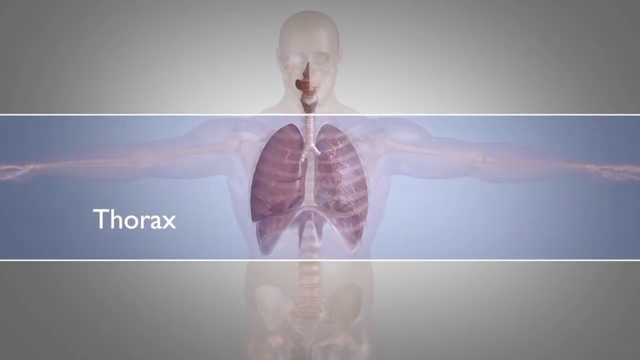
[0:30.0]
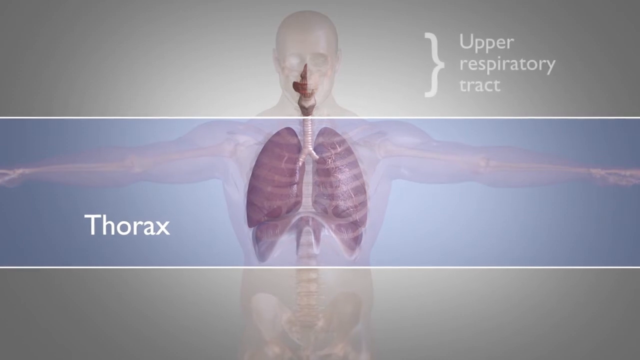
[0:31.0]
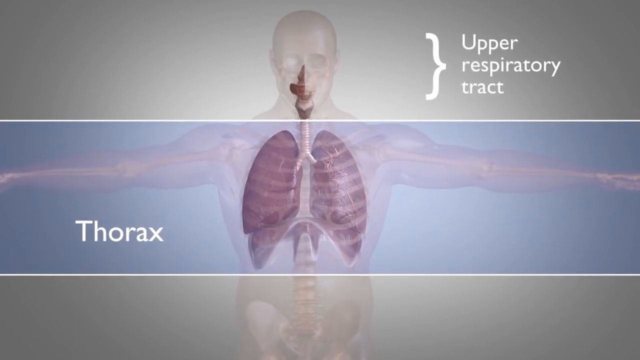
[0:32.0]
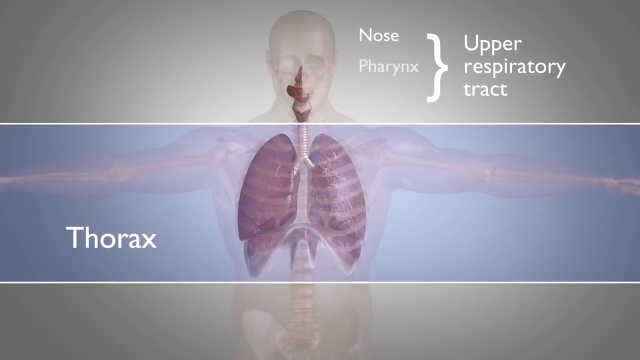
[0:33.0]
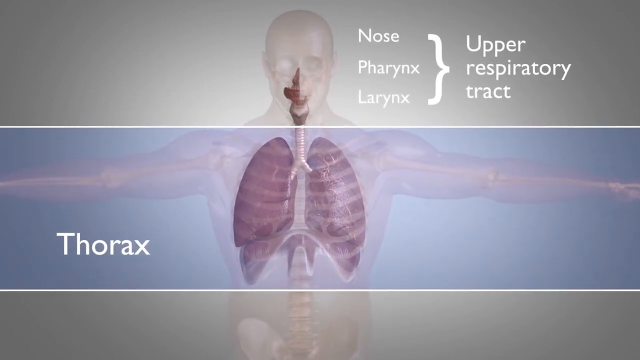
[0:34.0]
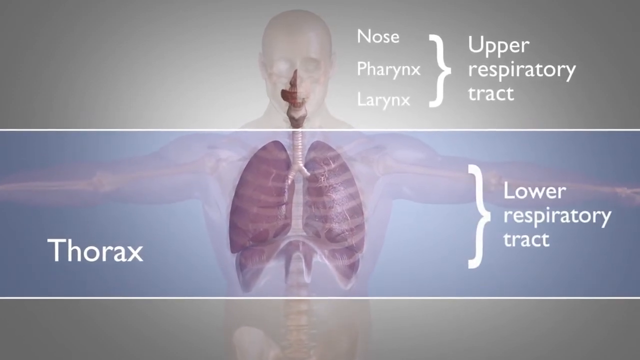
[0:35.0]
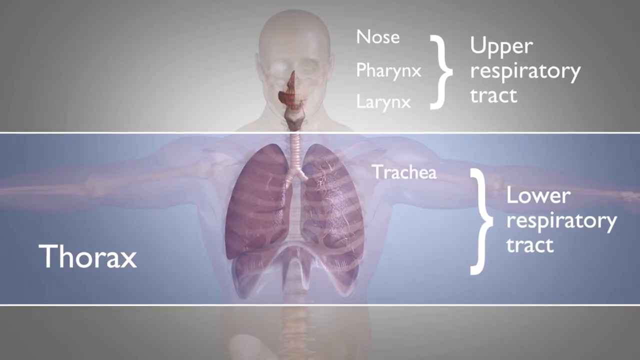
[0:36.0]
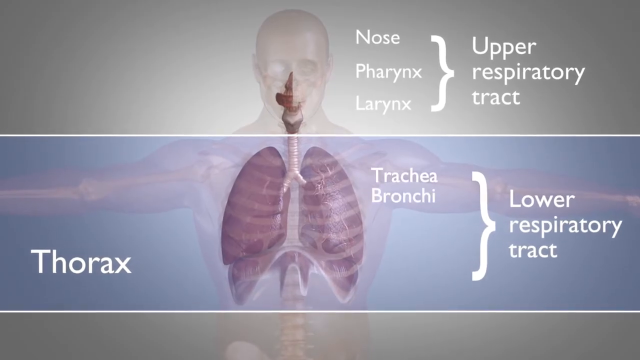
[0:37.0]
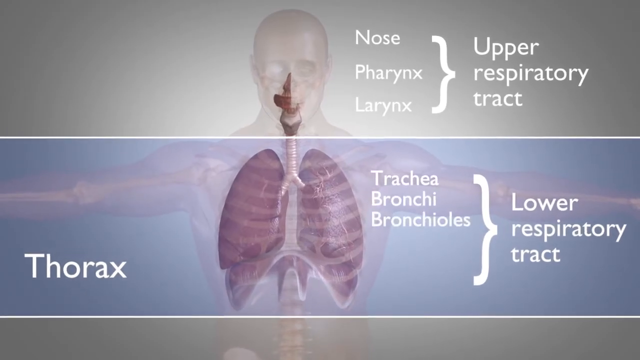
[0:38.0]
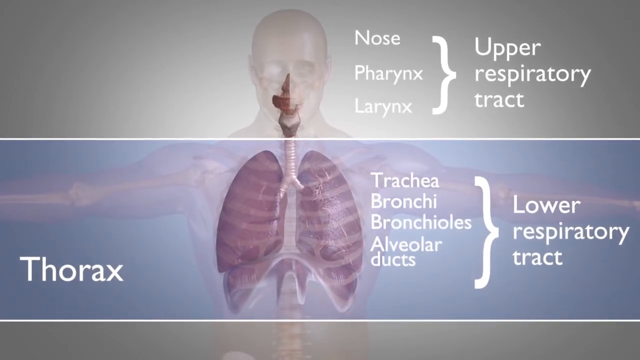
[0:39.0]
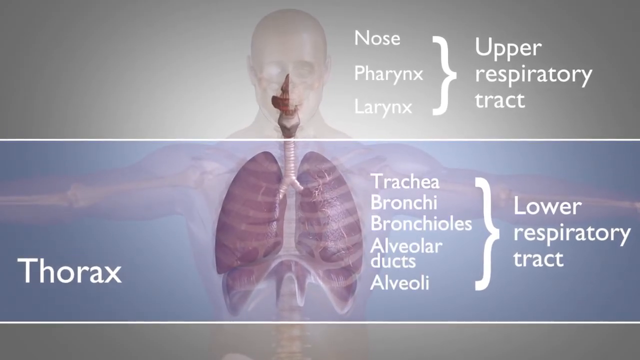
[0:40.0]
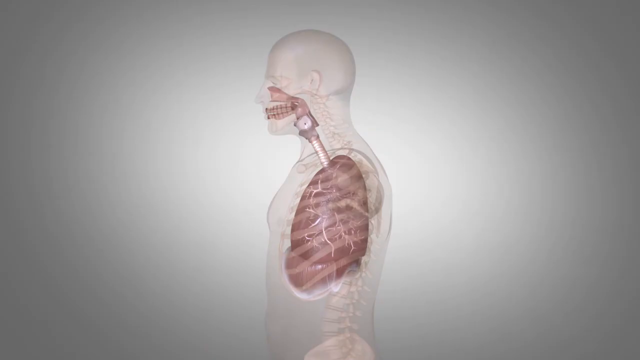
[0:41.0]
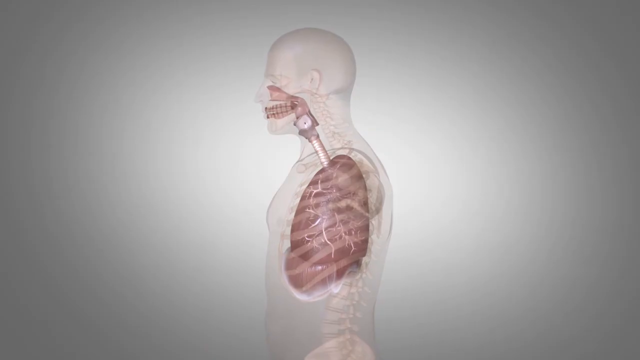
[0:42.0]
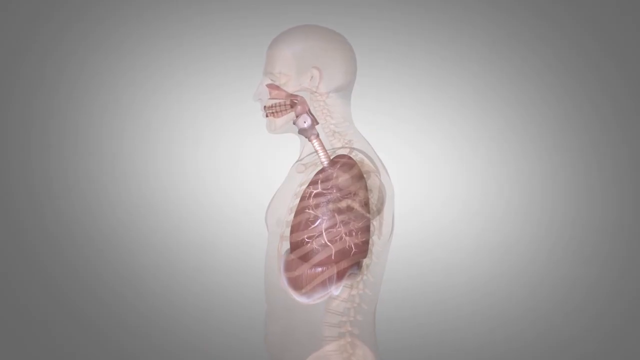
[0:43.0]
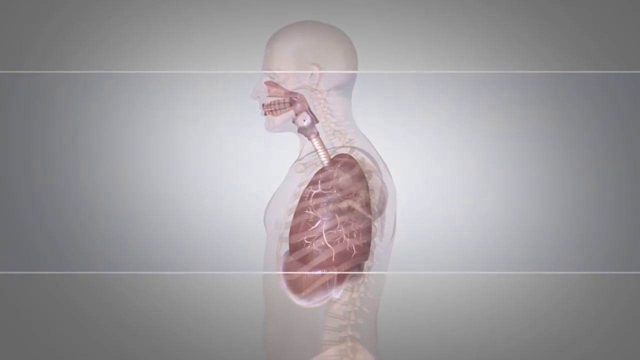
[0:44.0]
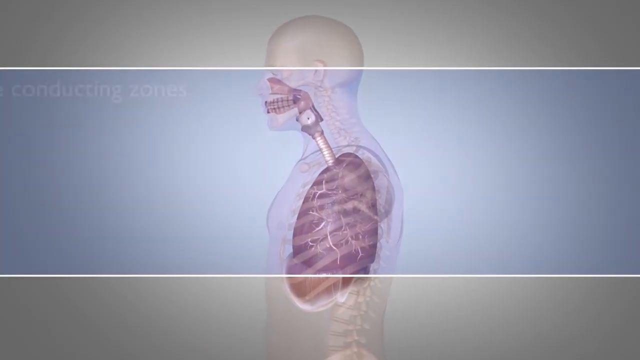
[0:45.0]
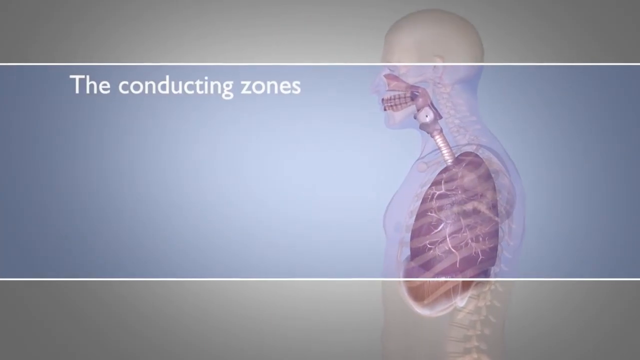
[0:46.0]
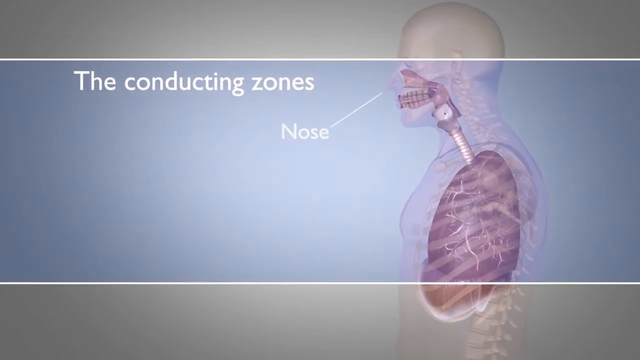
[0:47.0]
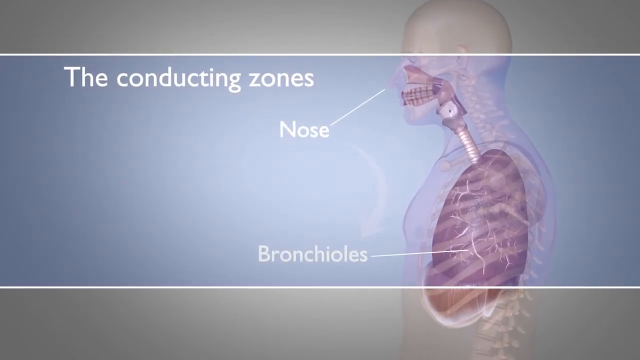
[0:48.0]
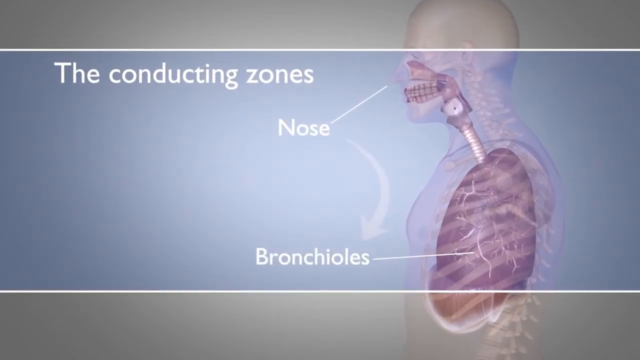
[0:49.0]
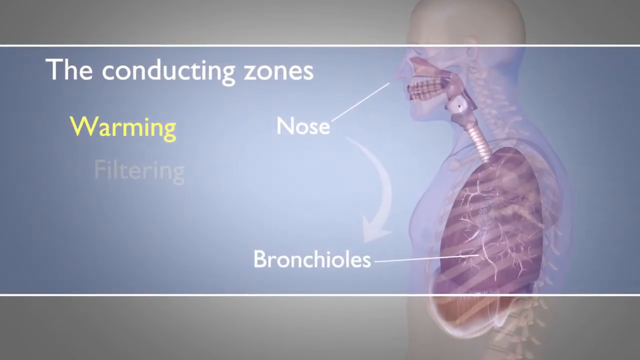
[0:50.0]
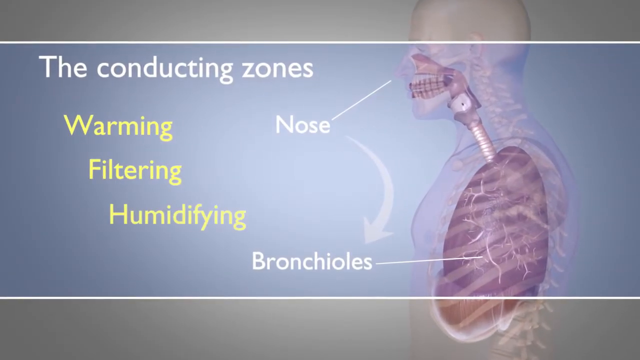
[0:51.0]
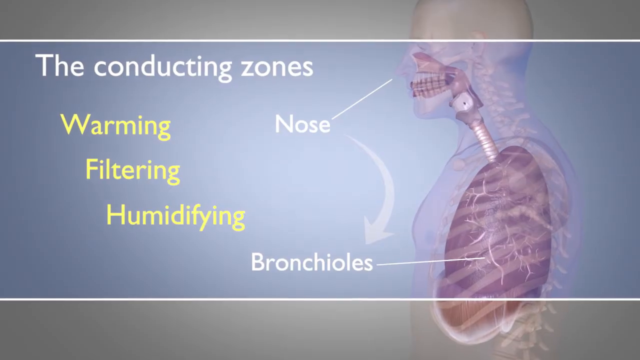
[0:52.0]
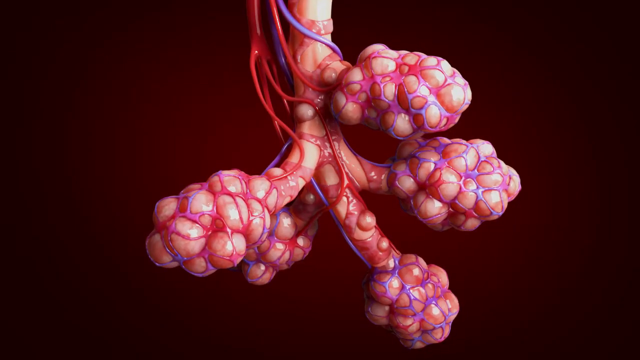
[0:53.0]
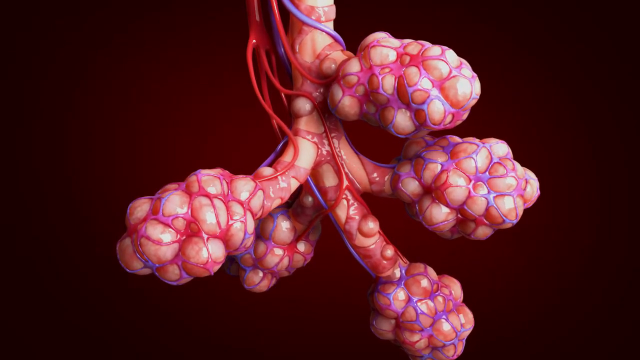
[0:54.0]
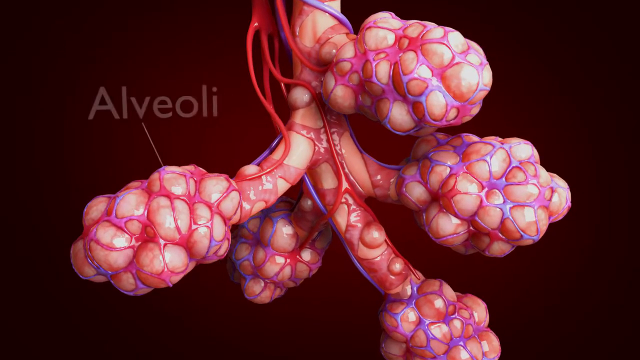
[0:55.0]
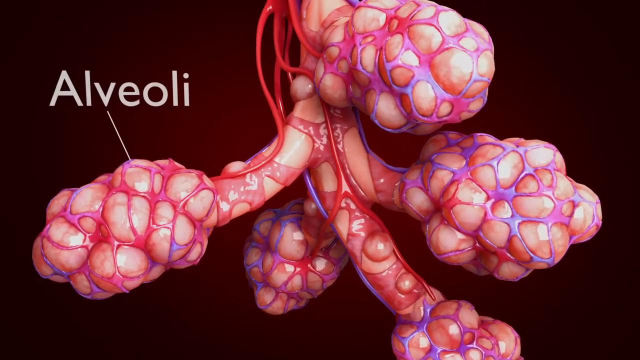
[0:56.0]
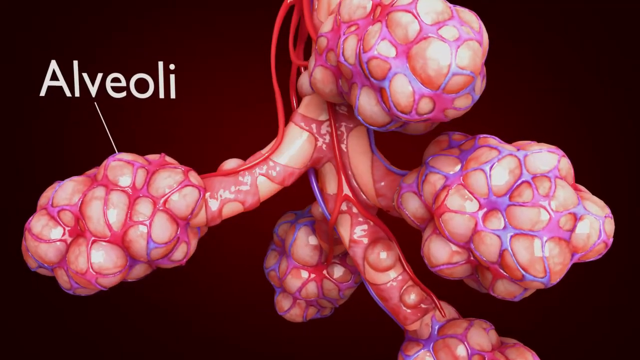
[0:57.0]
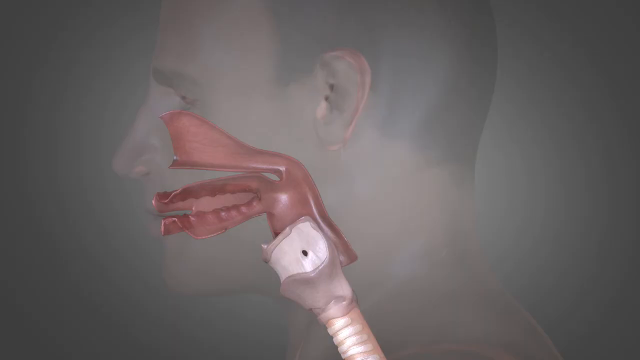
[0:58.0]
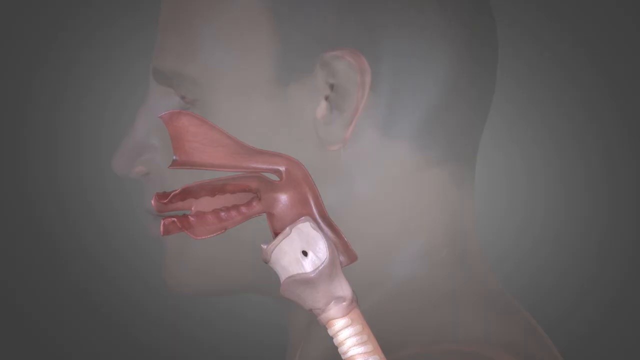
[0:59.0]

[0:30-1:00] A translucent model of the human body with its arms outstretched shows the interior of the body. The lungs look pink, there are pink spots in the mouth and behind the nose, and the bronchial tubes and esophagus run from the mouth to the lungs and lower body. A wide, transparent blue line appears across the mid portion of the model, including the lungs, and the word "thorax" appears on the left side of the screen. A bracket appears next to the head of the model with the text "upper respiratory tract" beside it, followed by the words "nose", "pharynx" and "larynx". Then a bracket labeled "lower respiratory tract" appears in the blue line, and next to it the words "trachea", "bronchi", "bronchioles", "alveolar ducts" and "alveoli" appear. A side view of the same model follows, showing the outline of the human body with slightly pink lungs inside. The blue line appears across the screen again, along with the text "The conducting zones". A line points to the nose with the word "nose", and another line points to the white lines inside the lung with the word "bronchioles".